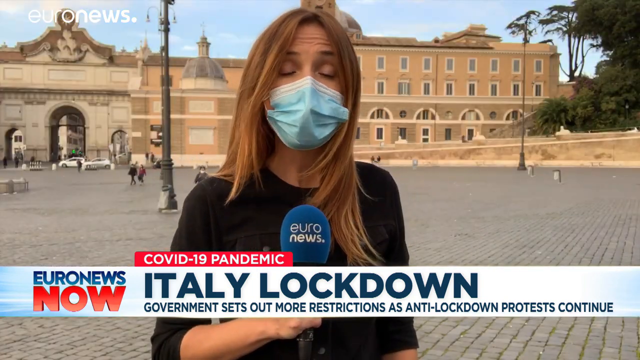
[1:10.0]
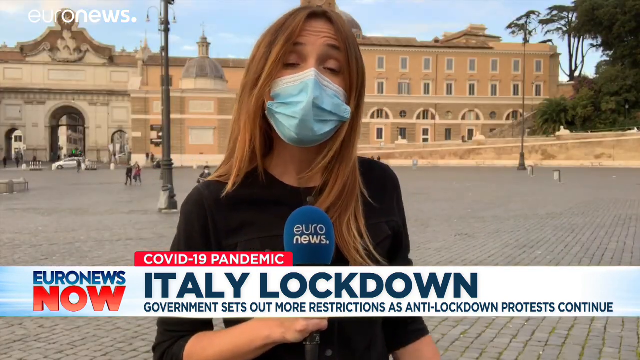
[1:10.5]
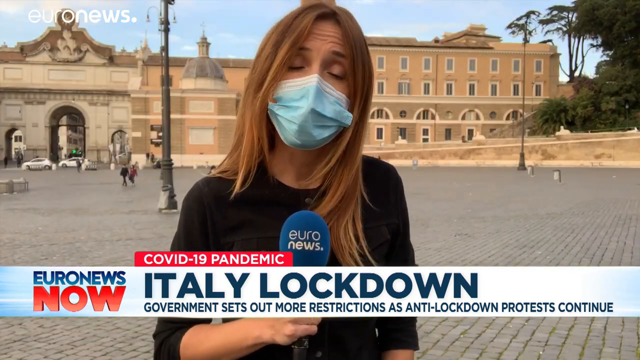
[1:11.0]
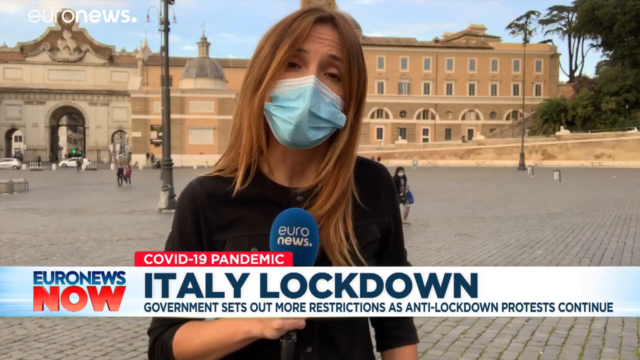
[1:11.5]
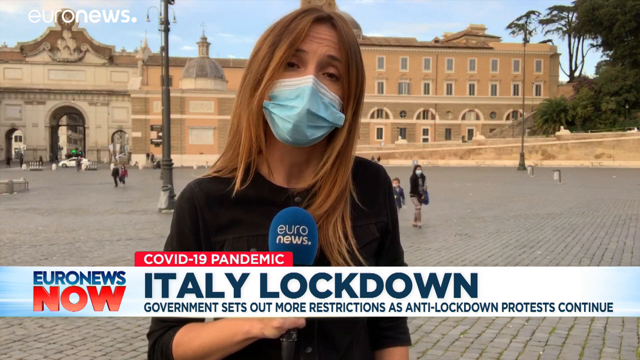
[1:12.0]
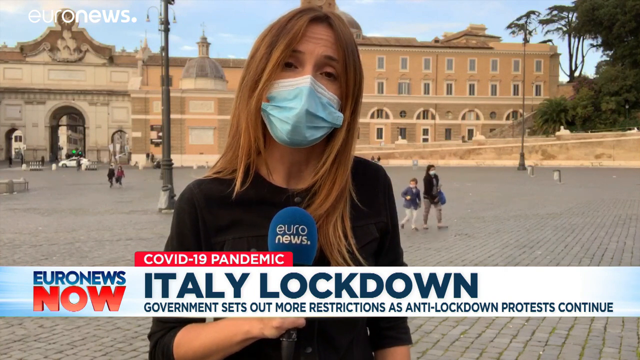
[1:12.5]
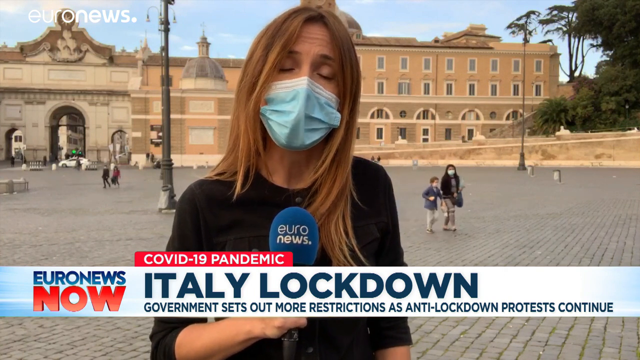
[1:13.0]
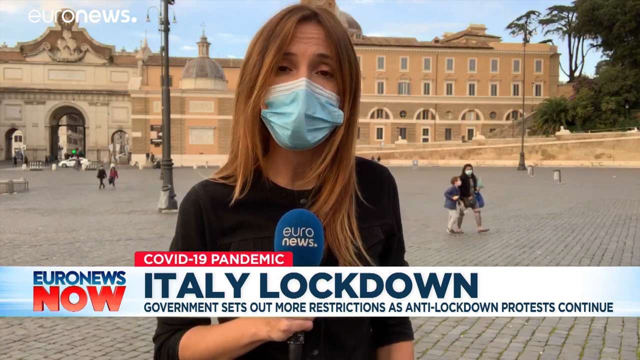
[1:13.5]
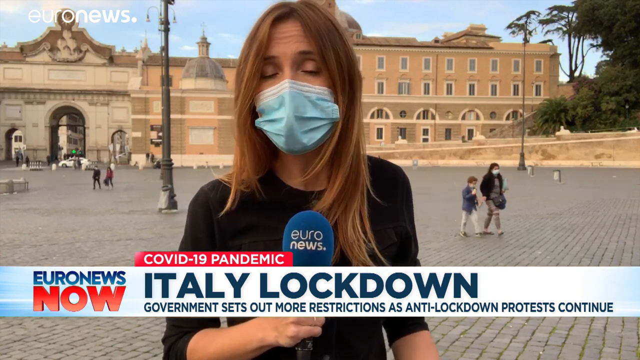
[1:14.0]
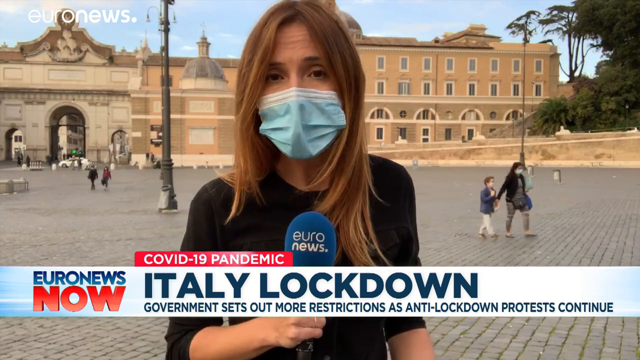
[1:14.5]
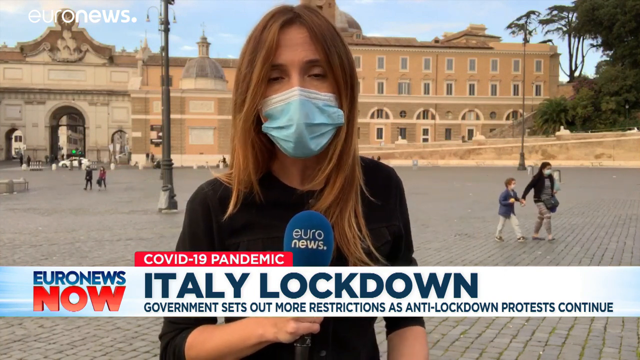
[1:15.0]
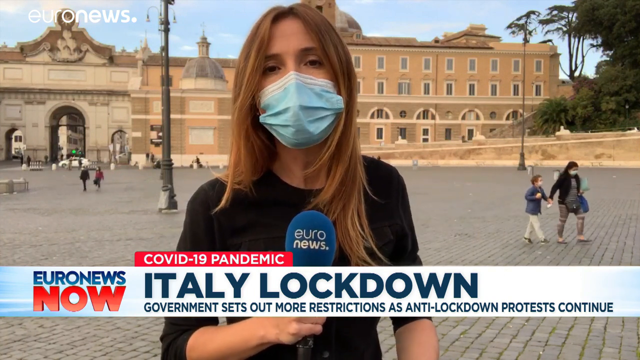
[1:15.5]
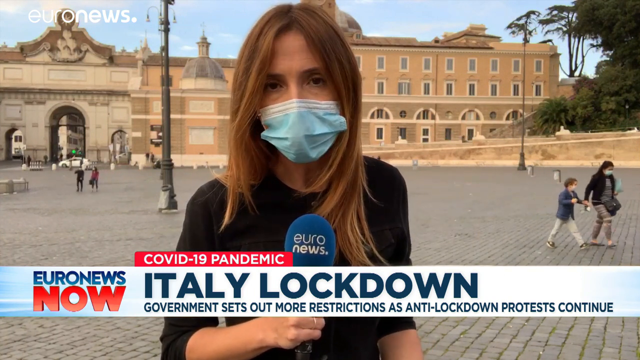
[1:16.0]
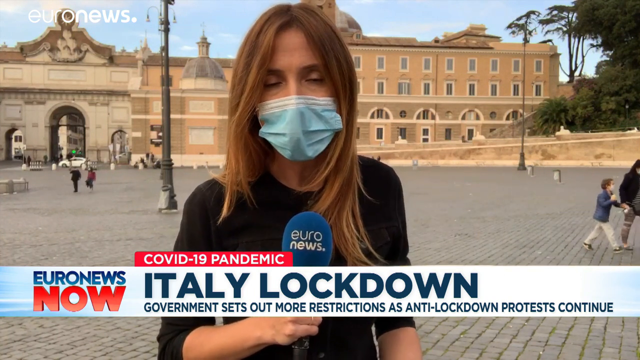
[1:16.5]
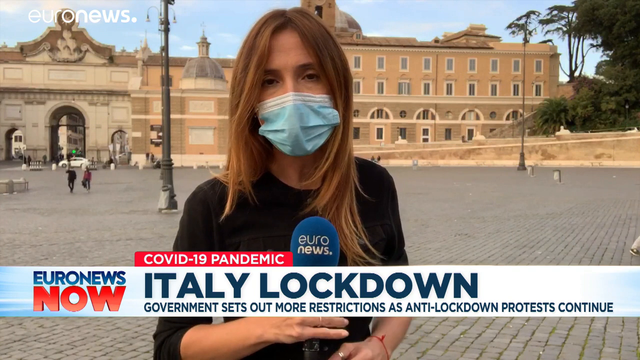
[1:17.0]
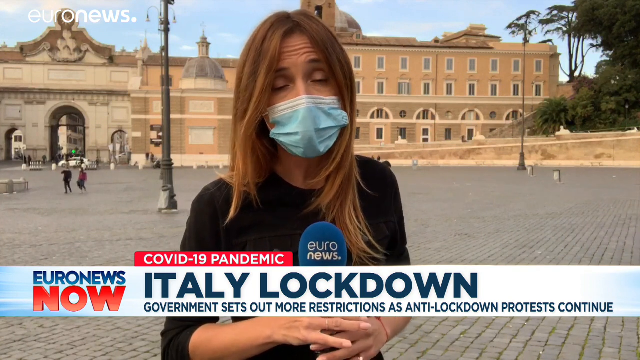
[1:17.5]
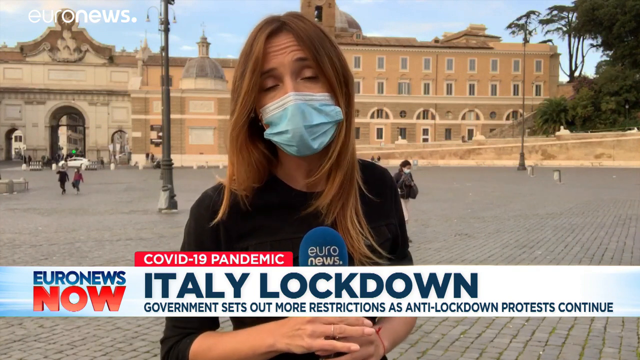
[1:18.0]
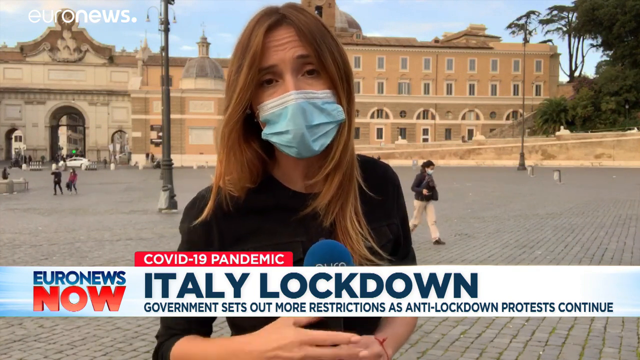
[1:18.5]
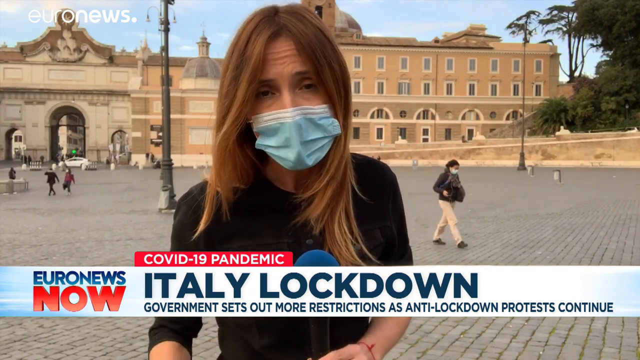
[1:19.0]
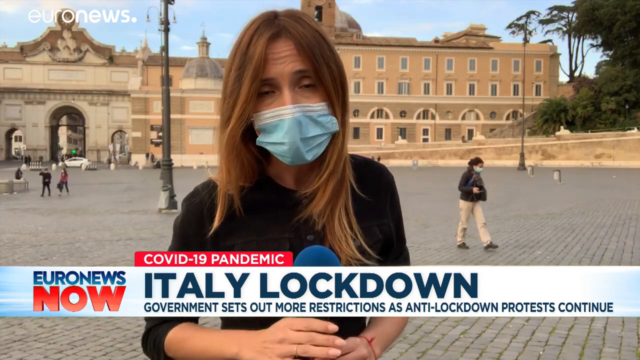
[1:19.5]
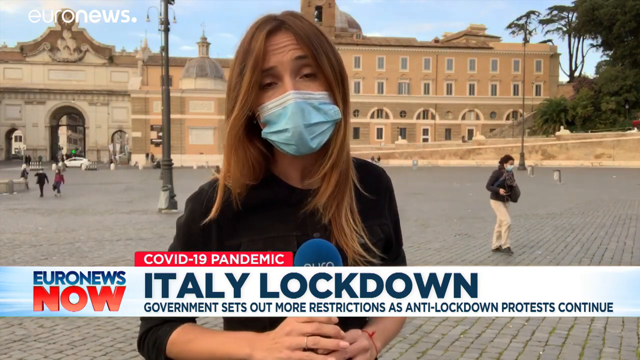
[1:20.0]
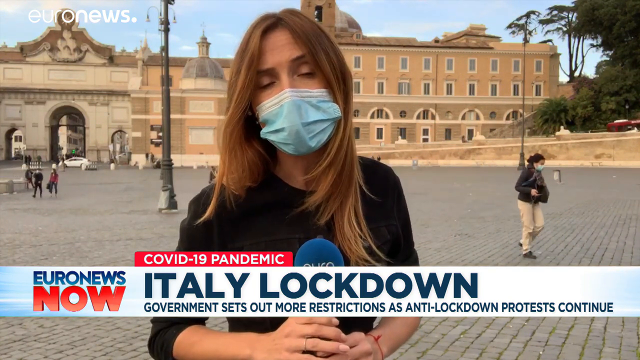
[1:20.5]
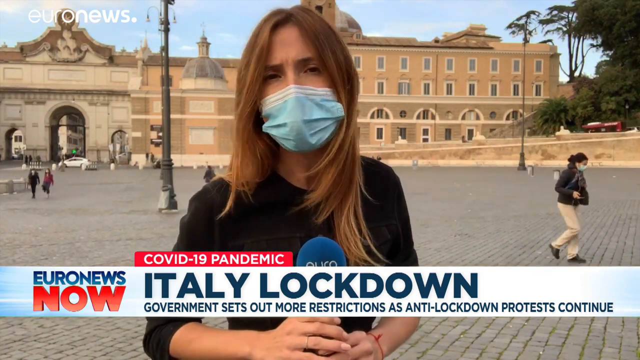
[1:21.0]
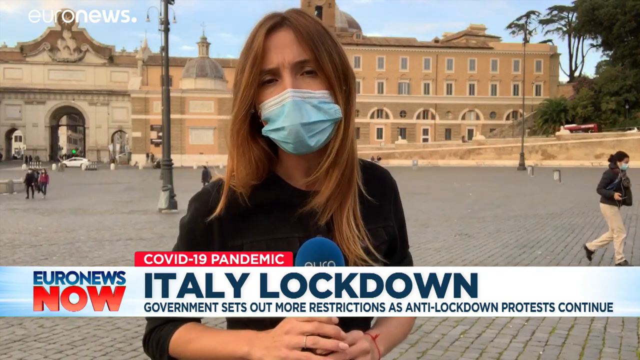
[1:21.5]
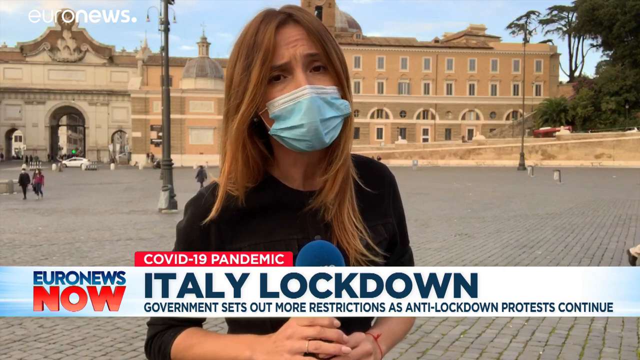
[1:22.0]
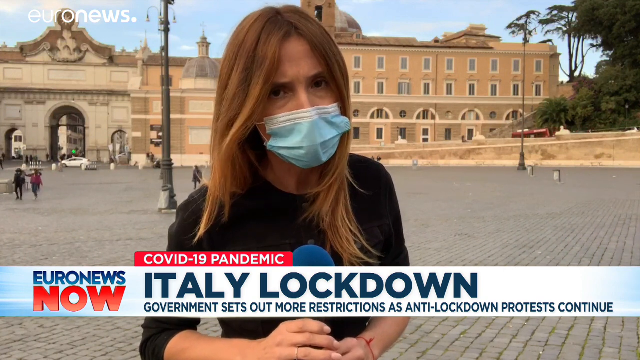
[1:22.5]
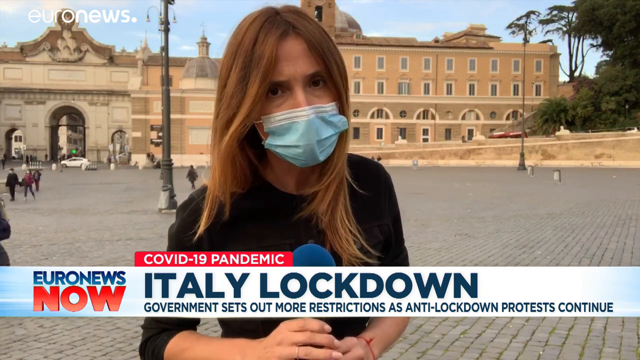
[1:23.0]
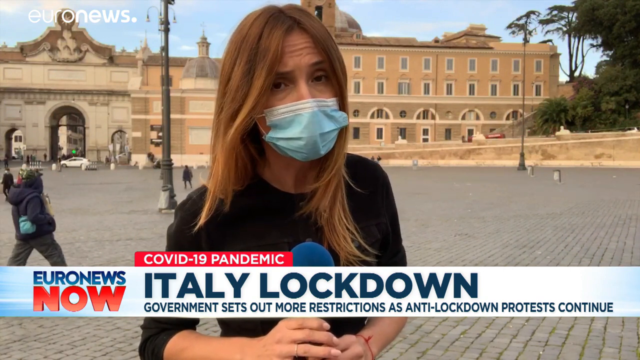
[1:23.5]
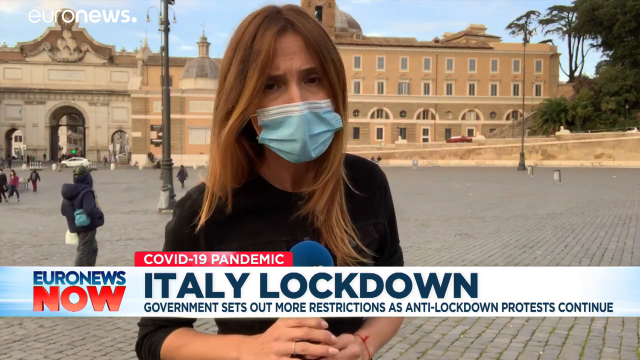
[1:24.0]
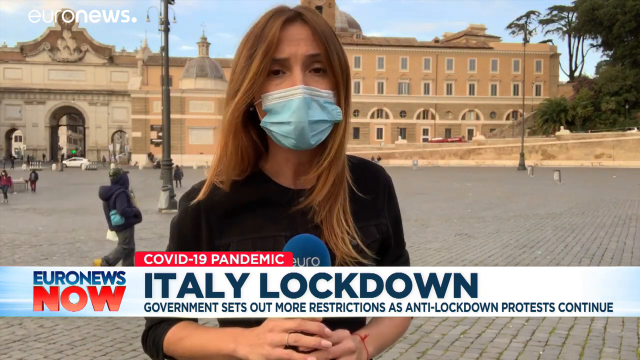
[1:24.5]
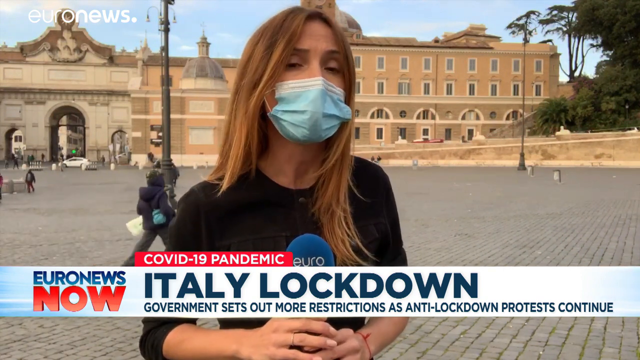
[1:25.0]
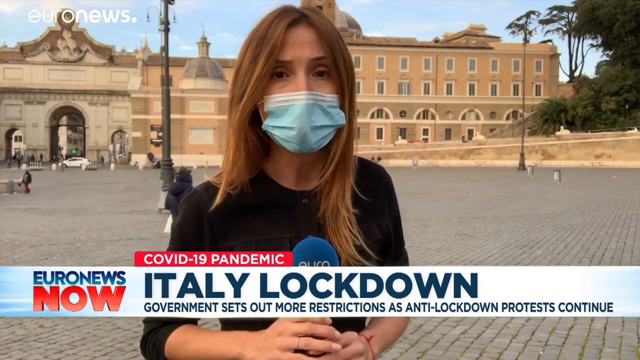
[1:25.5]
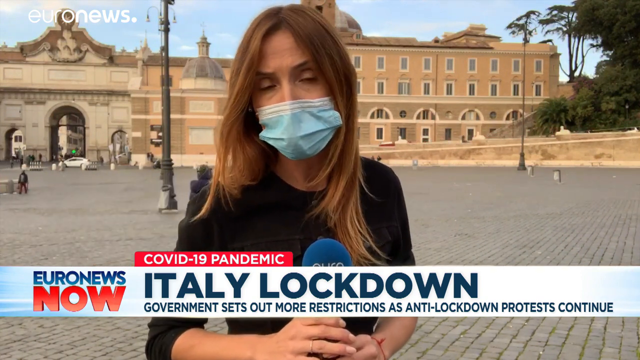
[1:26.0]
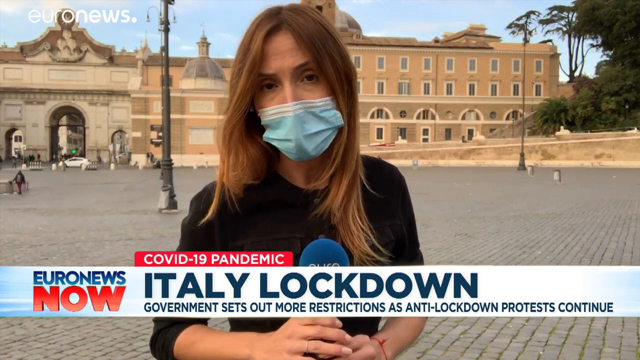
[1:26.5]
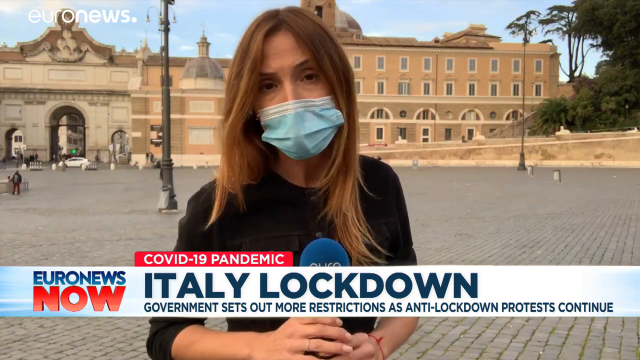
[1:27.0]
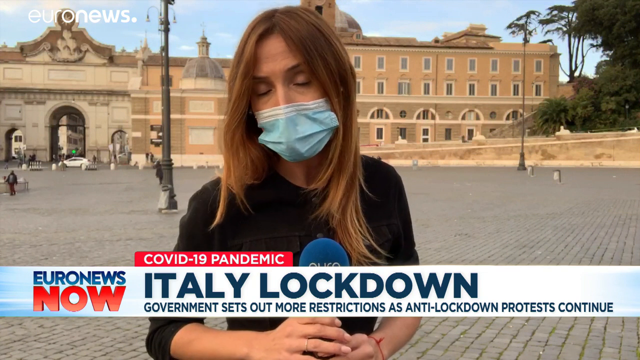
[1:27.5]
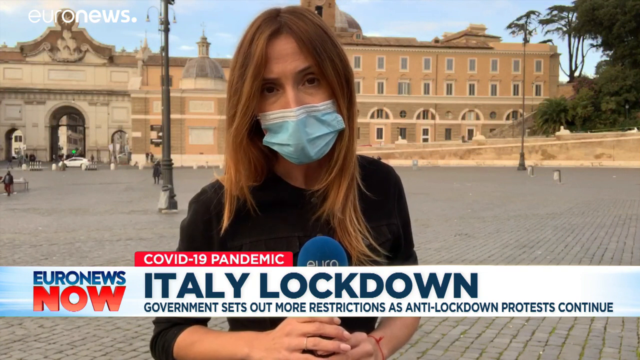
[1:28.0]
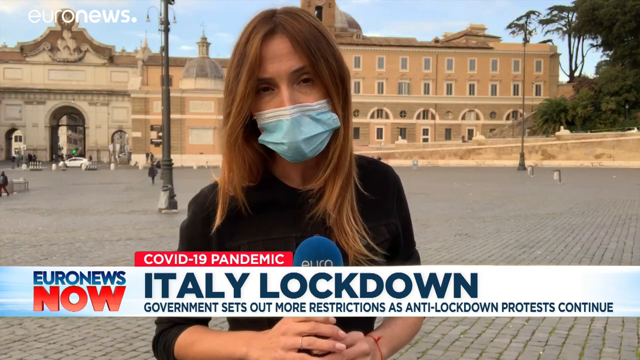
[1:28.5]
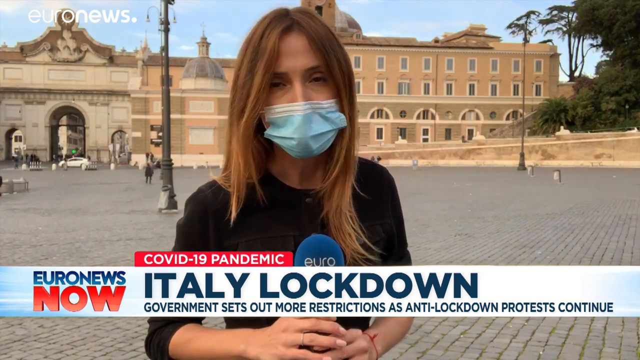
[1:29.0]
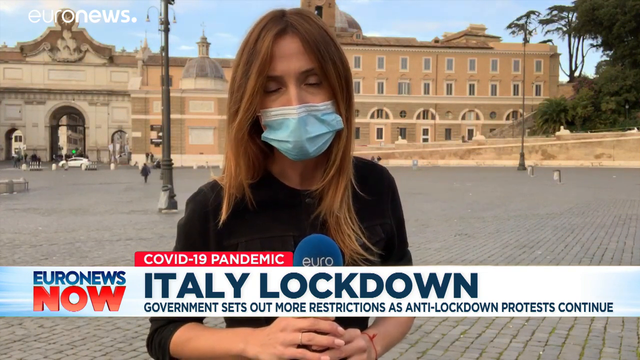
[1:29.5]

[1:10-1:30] A woman with long brown blonde hair extending past her shoulders wears a blue and white COVID mask. The background looks like a Rome setting, with a few people walking, light posts on both the left and right sides, and a bunch of trees in the upper right corner. White text in the top left says "Euronews". At the bottom is a very long white and blue banner with blue and orange text on the left side that says "Euronews now", and to its right bolded blue text that says "Italy lockdown" and more text that says "government sets out more restrictions as anti-lockdown protests continue." Above it is an orange banner with white text that says "COVID-19 pandemic". The woman talks into her microphone. A woman and a child walk by, and another woman in the background also wears a mask. A man in a big fluffy blue jacket walks by behind the woman as she continues talking on camera. A large building is in the background.